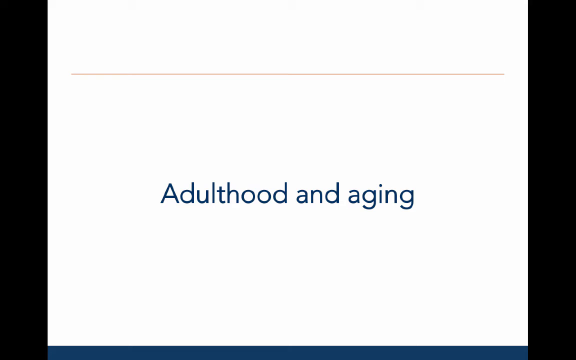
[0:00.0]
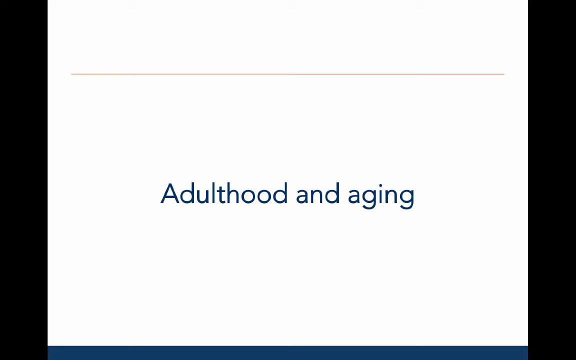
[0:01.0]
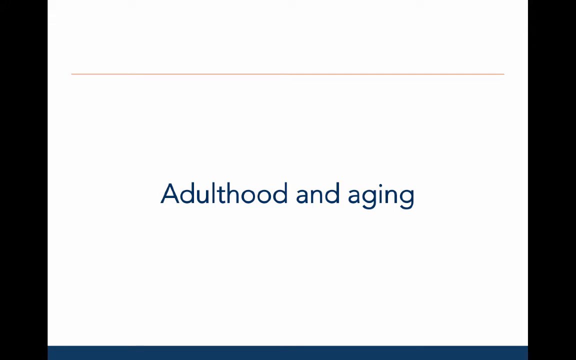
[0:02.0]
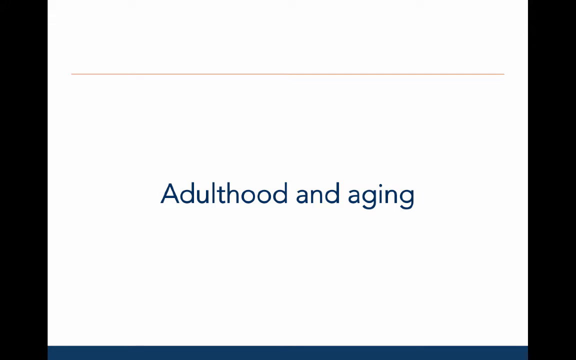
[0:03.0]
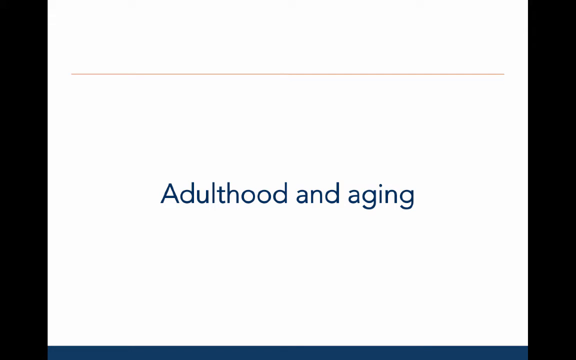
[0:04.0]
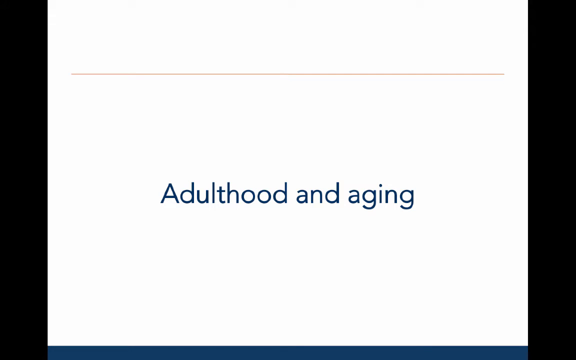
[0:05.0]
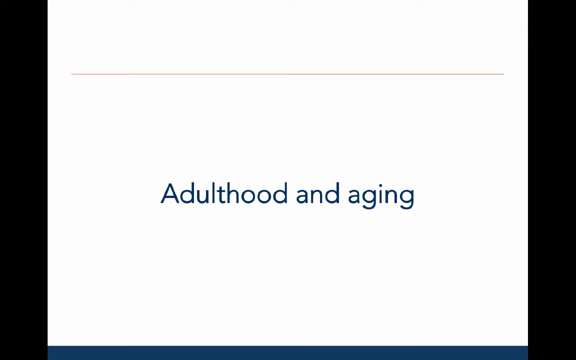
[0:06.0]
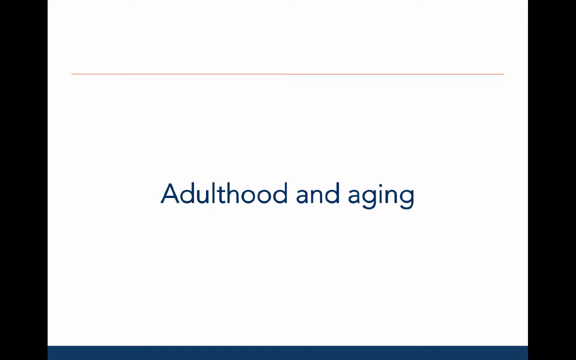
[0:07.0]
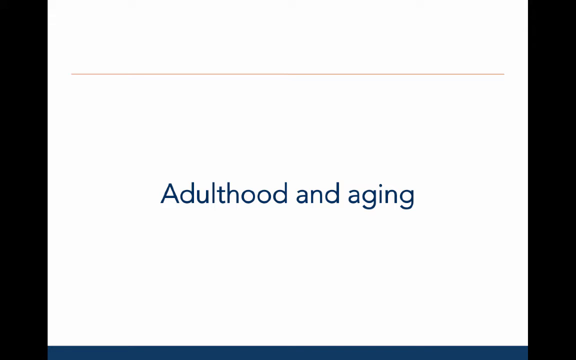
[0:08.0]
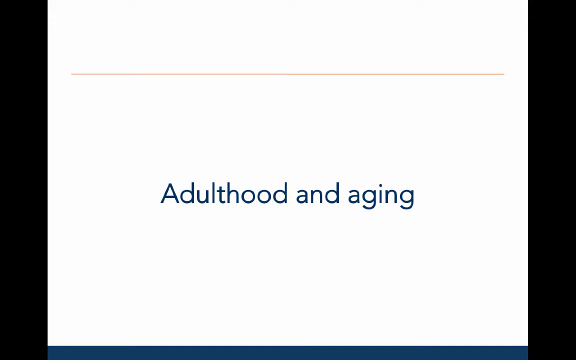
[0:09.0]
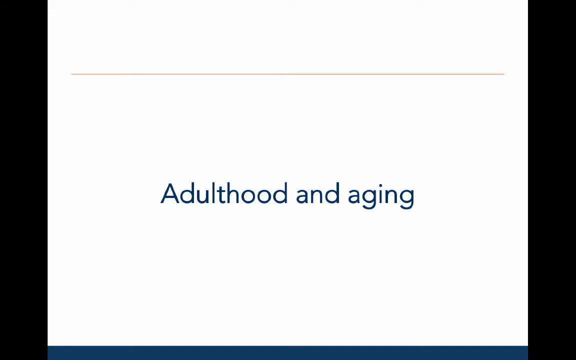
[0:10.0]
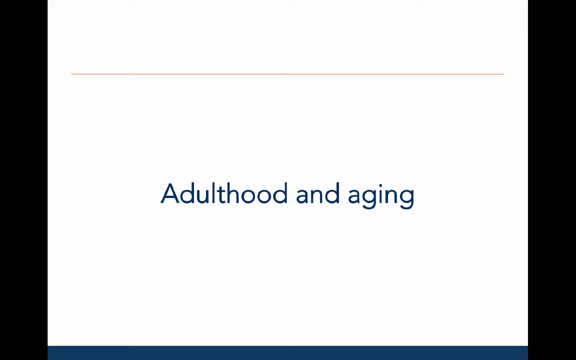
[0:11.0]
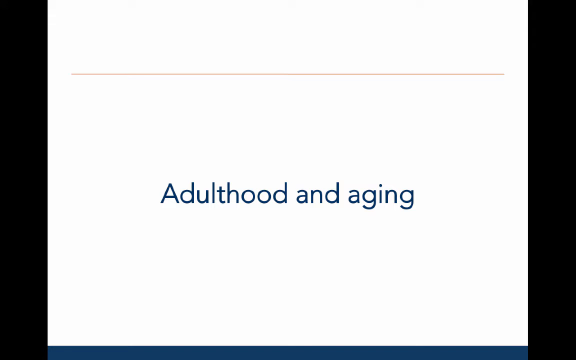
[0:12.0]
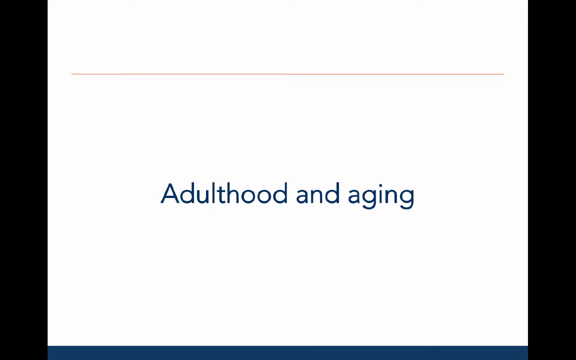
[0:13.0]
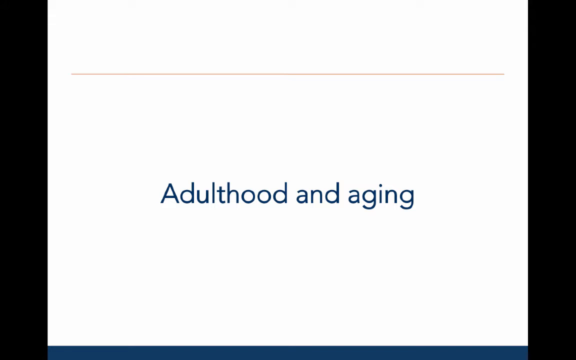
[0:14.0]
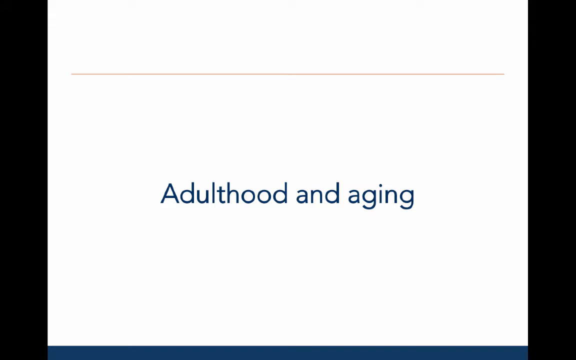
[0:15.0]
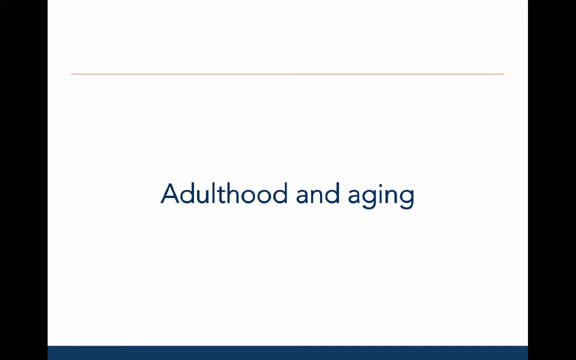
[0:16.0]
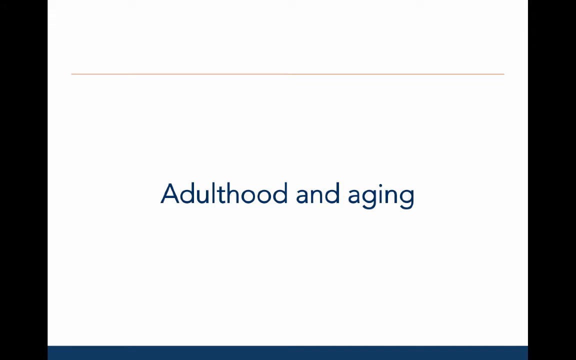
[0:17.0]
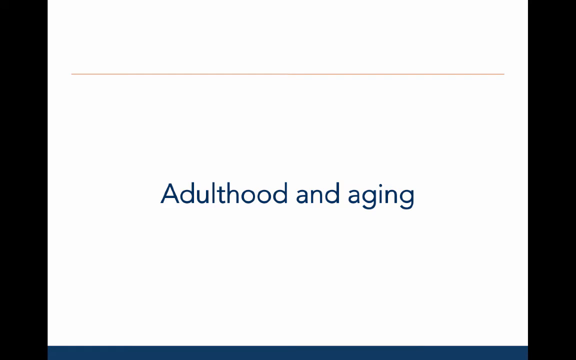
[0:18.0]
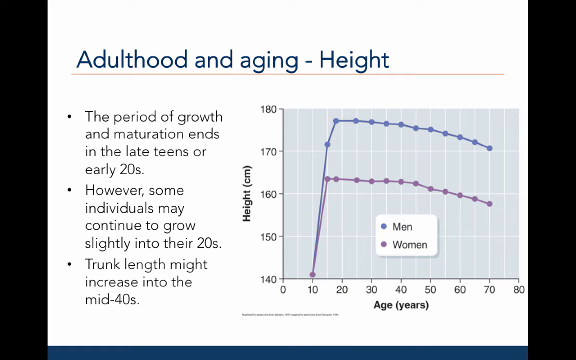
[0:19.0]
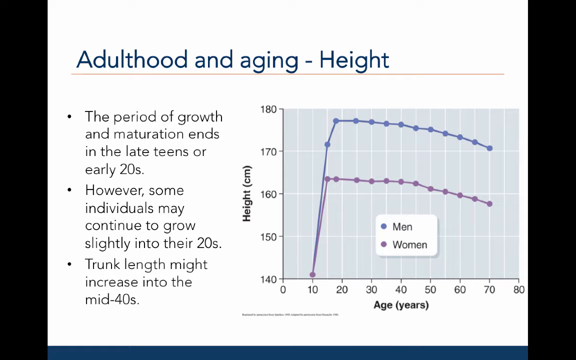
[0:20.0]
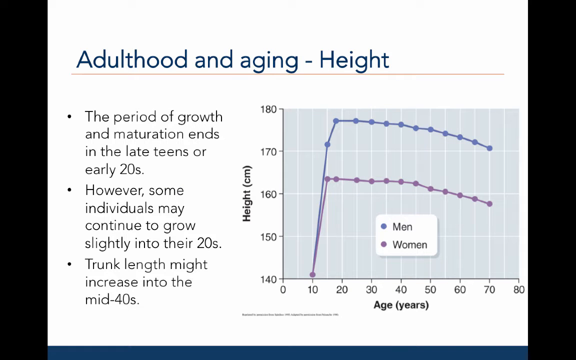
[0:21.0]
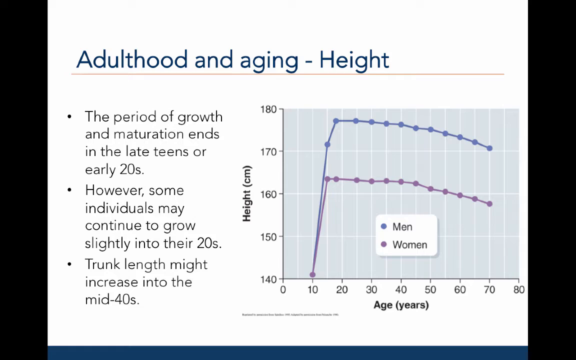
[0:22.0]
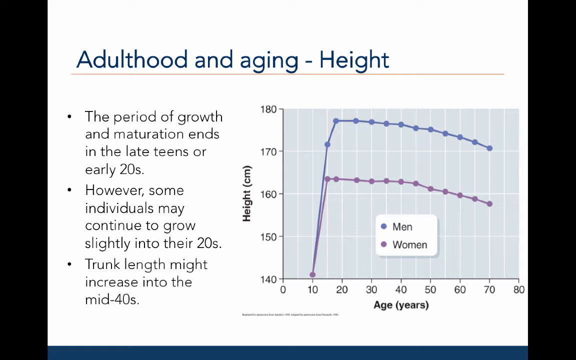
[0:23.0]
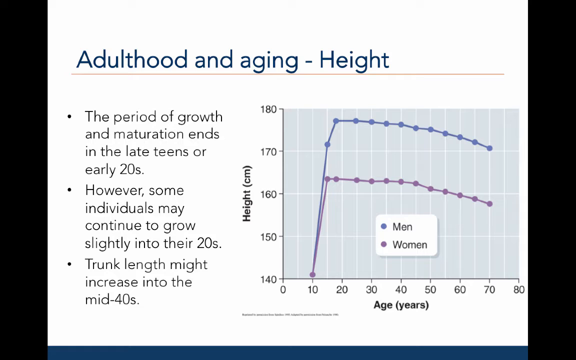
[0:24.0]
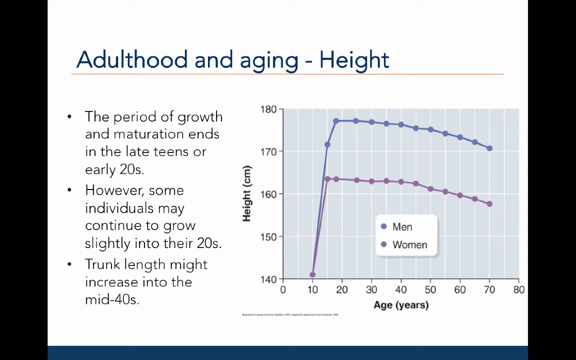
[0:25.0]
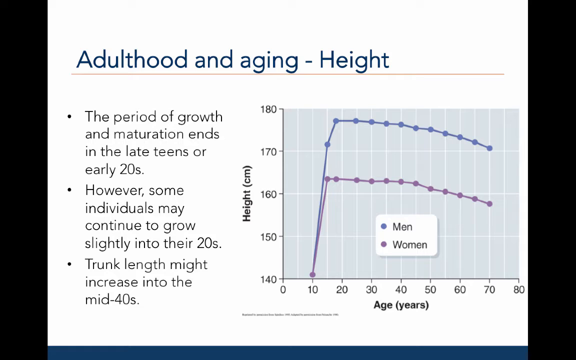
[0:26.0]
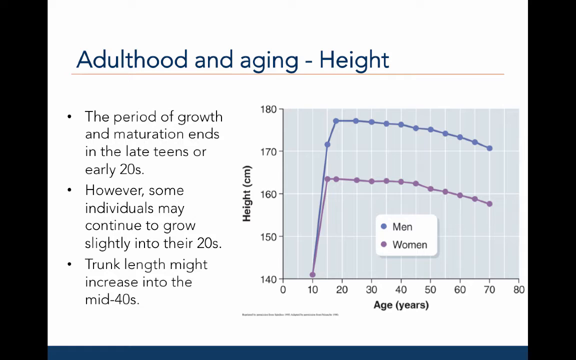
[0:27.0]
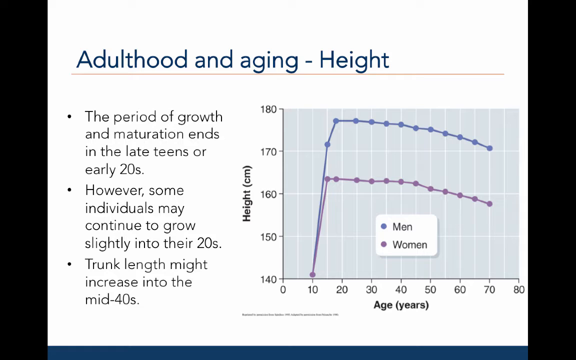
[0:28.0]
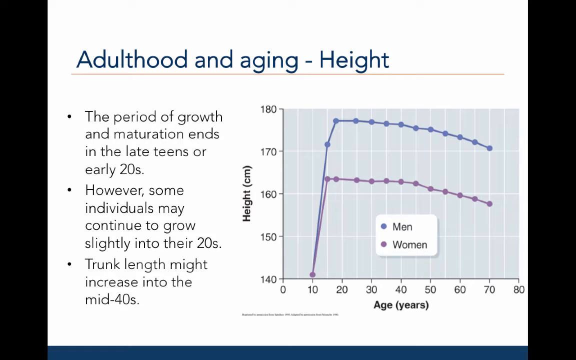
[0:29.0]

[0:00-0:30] A presentation on adulthood and aging shows its height section, with highlighted key points. The text states that the period of growth and maturation ends in the late teens or early twenties, that some individuals may continue to grow slightly into their twenties, and that trunk length might increase in the mid-forties. A chart shows how individuals grow: the vertical axis is height in centimeters, ranging from 140 to 180, and the horizontal axis is age in years, ranging from 0 to 80. The chart has indicators for men and women showing how tall they can get across the age span, purple for women and blue for men.